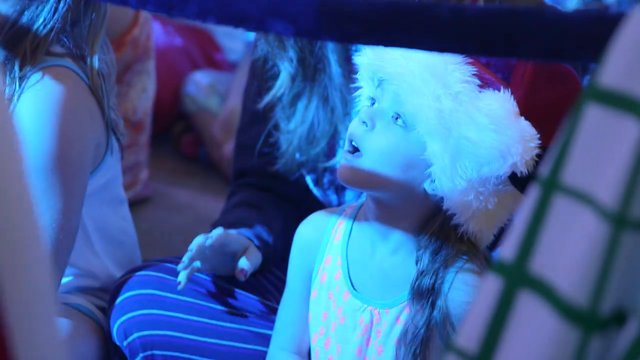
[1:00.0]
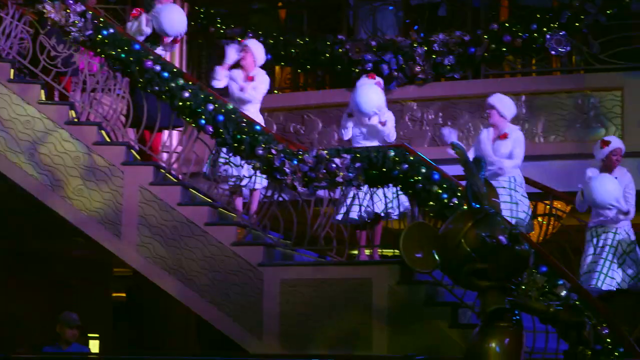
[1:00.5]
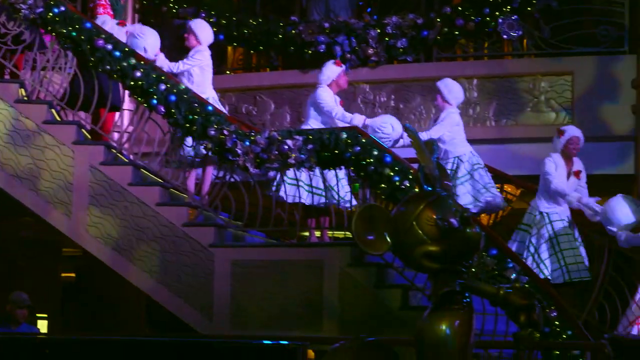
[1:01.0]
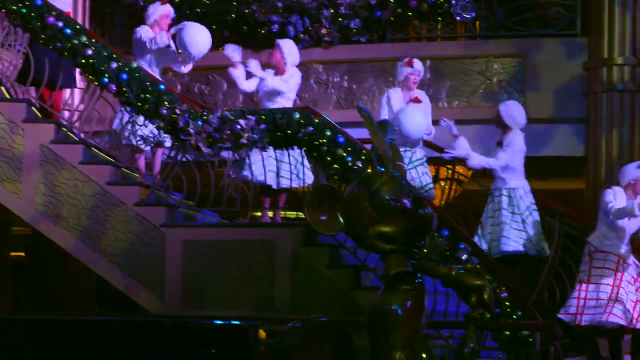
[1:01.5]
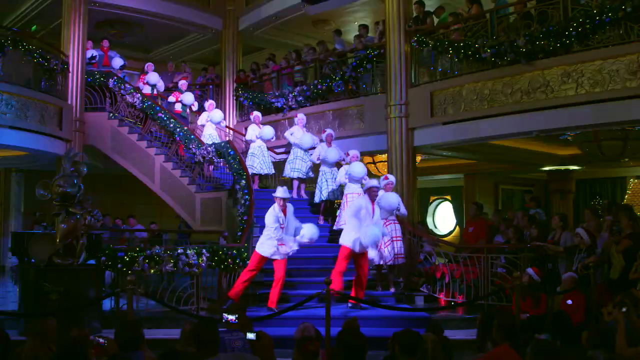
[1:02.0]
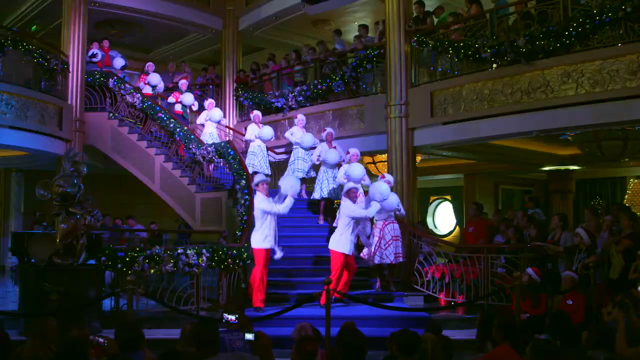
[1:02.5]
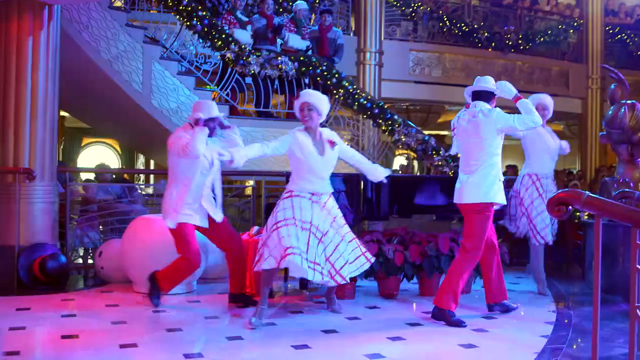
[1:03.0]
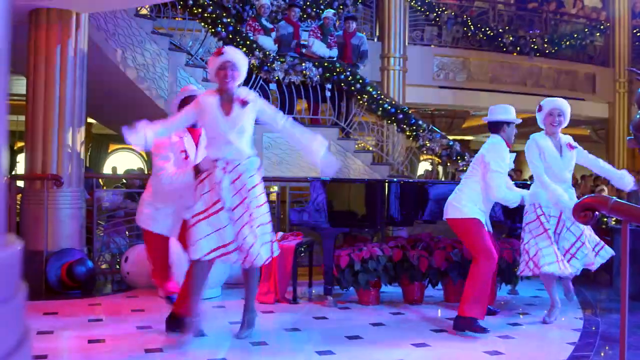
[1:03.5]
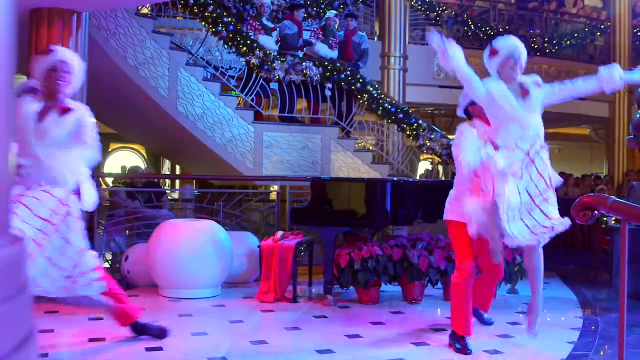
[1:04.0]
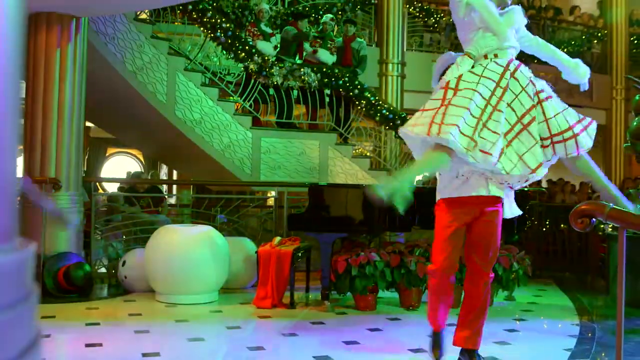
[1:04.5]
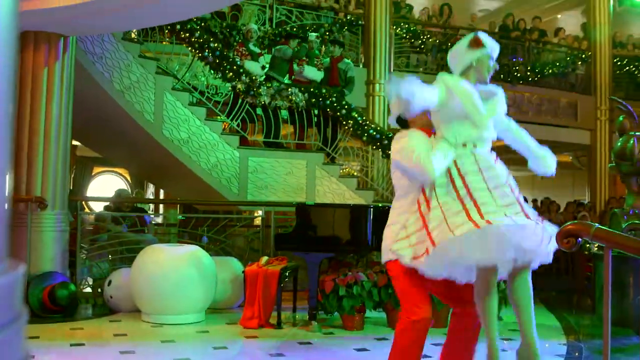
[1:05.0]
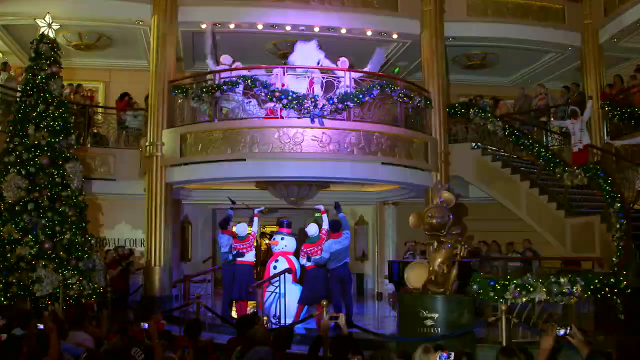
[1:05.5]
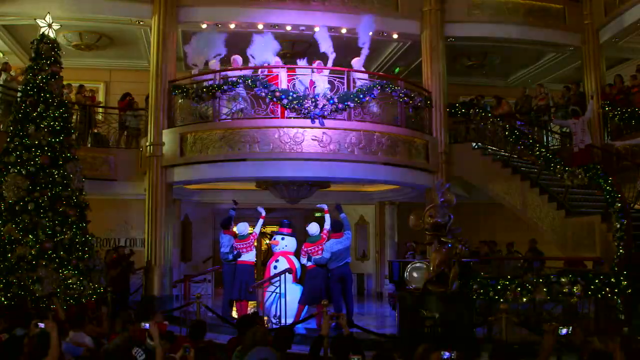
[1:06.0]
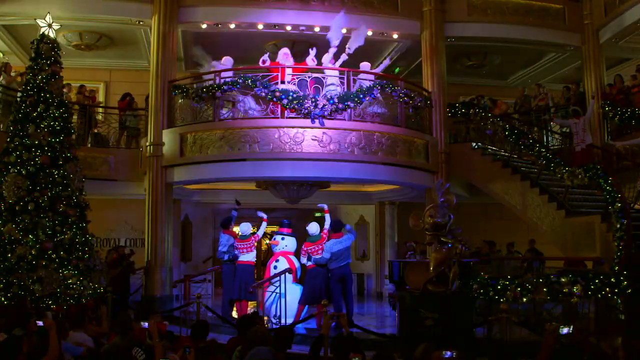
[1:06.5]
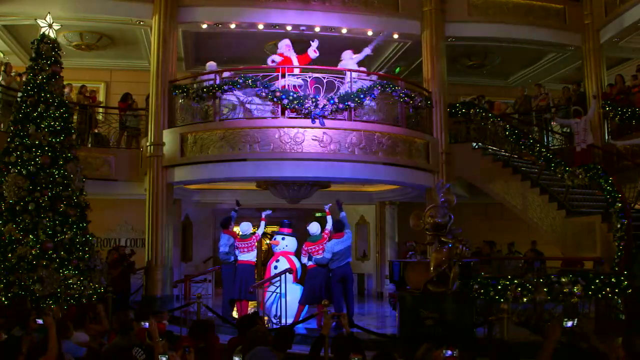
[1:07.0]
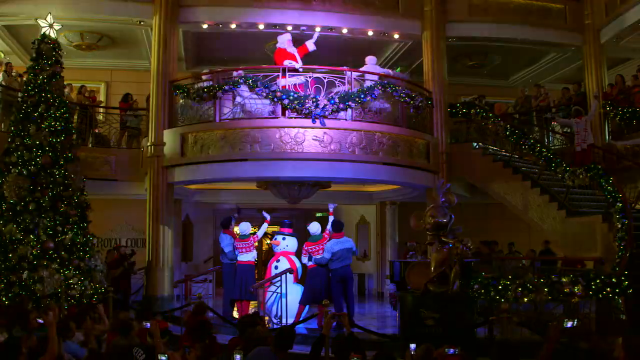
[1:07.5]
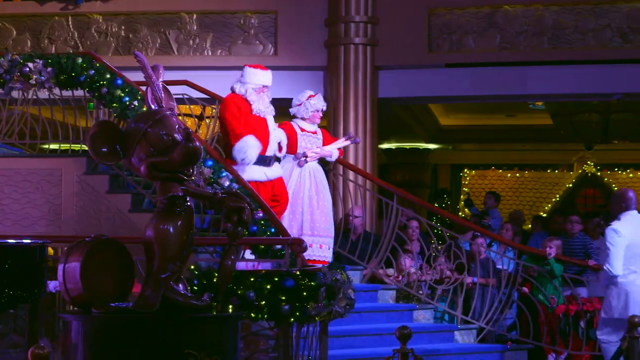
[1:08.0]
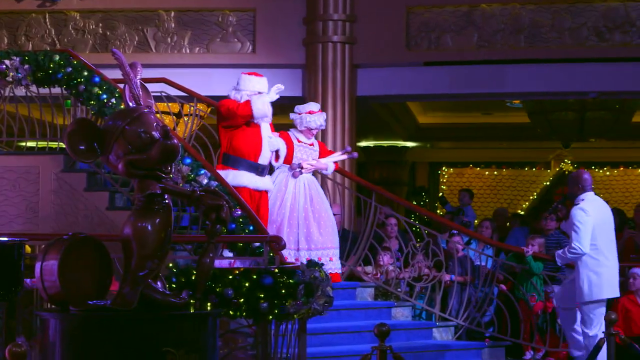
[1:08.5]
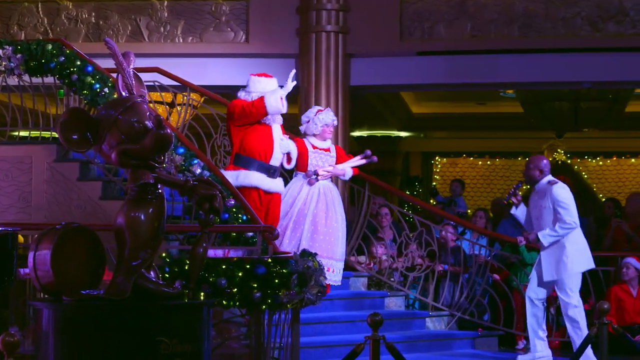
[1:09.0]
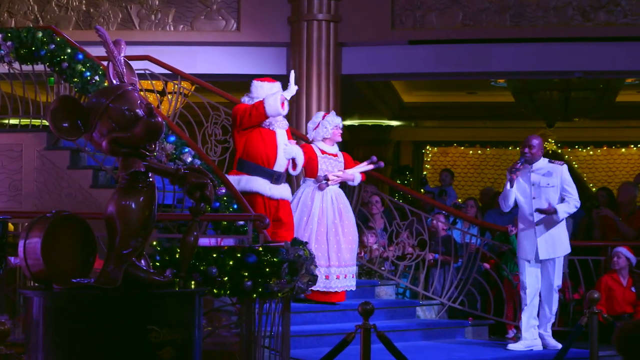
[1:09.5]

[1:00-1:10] A side view shows dancers on the big staircase passing large snowballs, larger than a person's head, kind of like an assembly line: each takes a snowball, passes it to the next person and turns around to take another. Two male dancers at the bottom of the staircase do a little jig with their legs. In another shot on the main floor, male dancers in white suit jackets, hats and red pants dance with ladies also in white and red, dancing and jumping. Next, dancers at the top open up to reveal Santa on the mezzanine, while underneath are a big snowman and dancers dressed in warm, cozy-looking winter sweaters. Santa comes to the front of the mezzanine and waves to people. Santa and Mrs. Claus then walk down the grand staircase; Santa waves and holds Mrs. Claus, and she holds Santa while carrying in her other hand what looks like a big list, like a naughty-or-nice list. Clayton, the cruise director, comes over to the stairs to greet them.